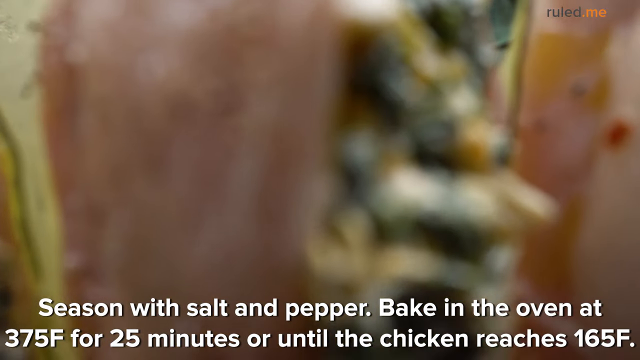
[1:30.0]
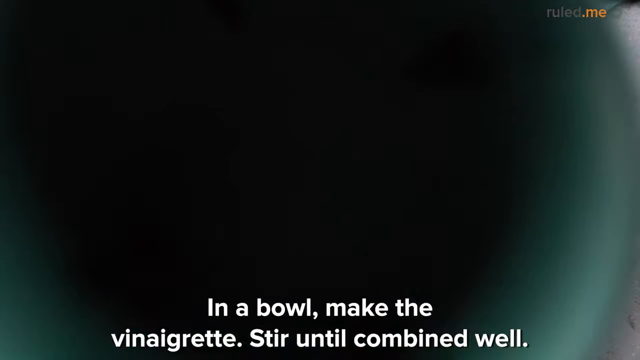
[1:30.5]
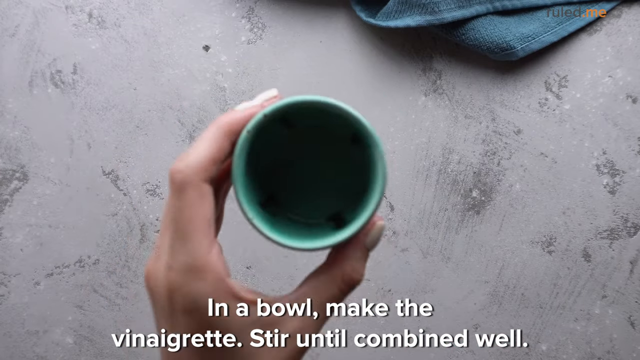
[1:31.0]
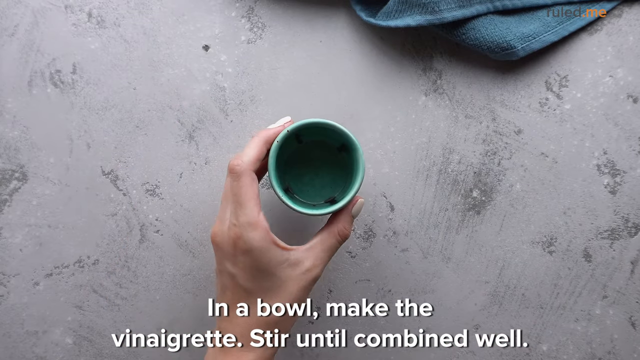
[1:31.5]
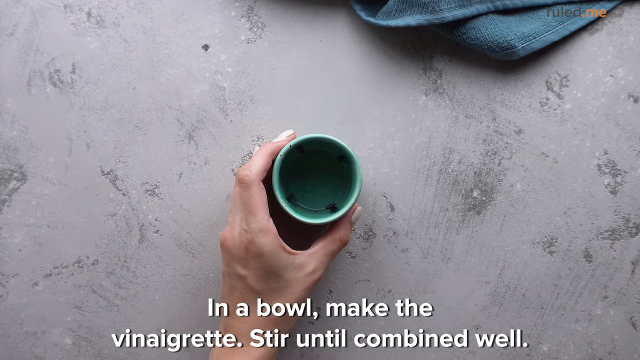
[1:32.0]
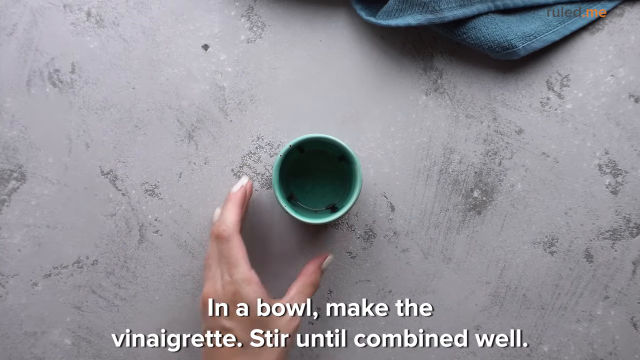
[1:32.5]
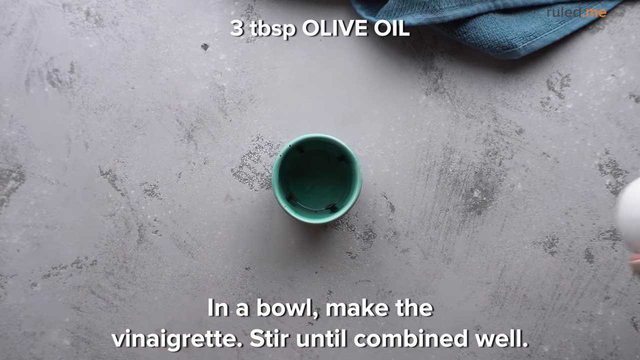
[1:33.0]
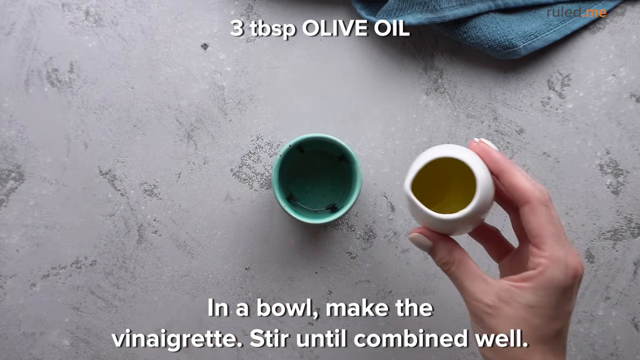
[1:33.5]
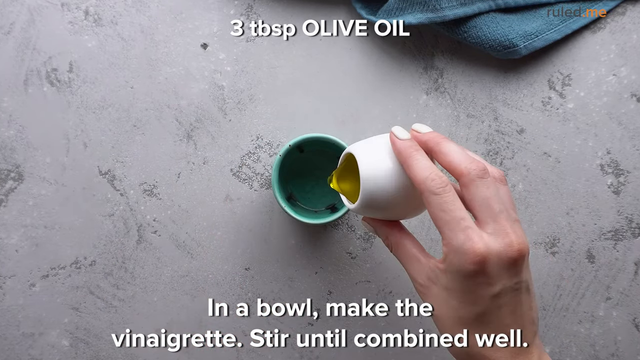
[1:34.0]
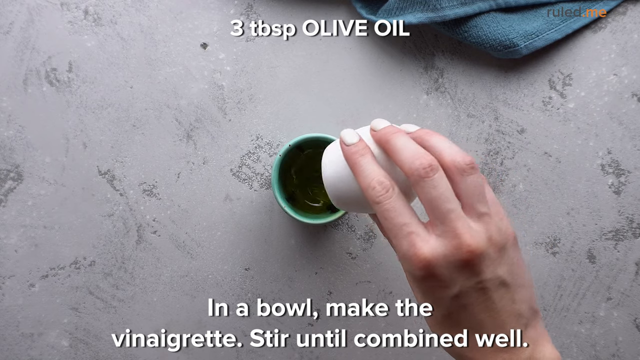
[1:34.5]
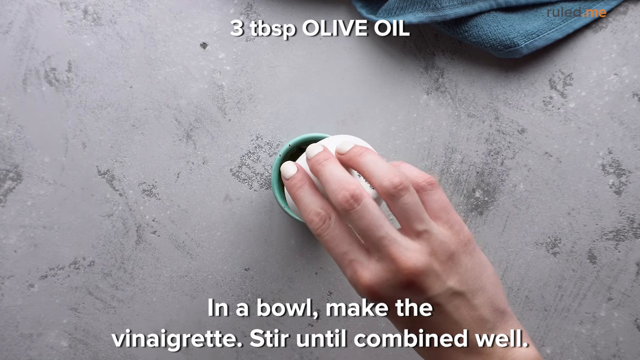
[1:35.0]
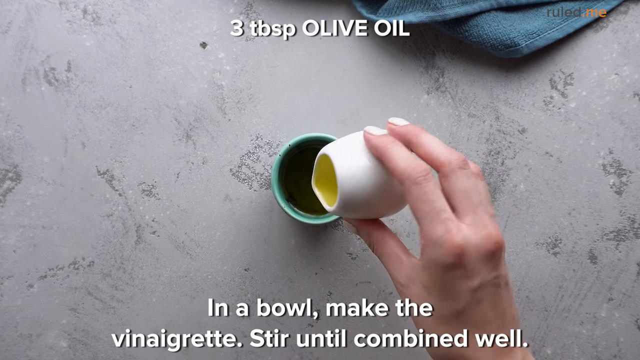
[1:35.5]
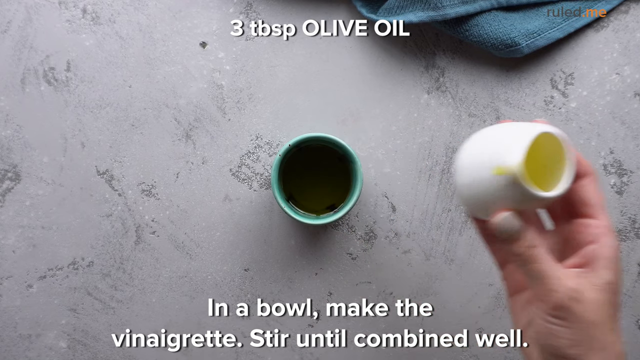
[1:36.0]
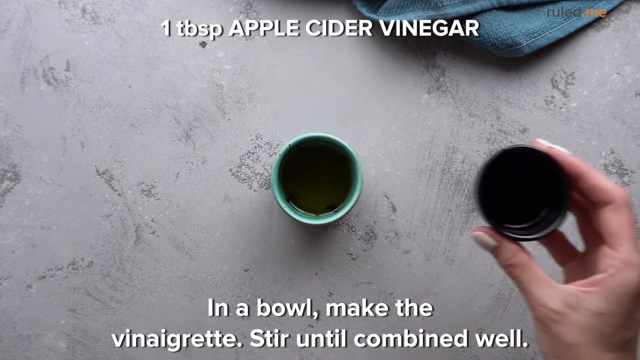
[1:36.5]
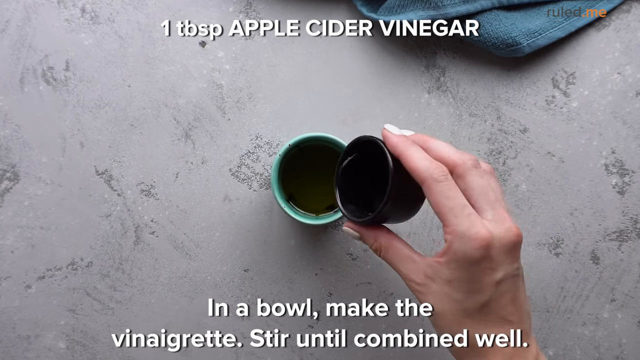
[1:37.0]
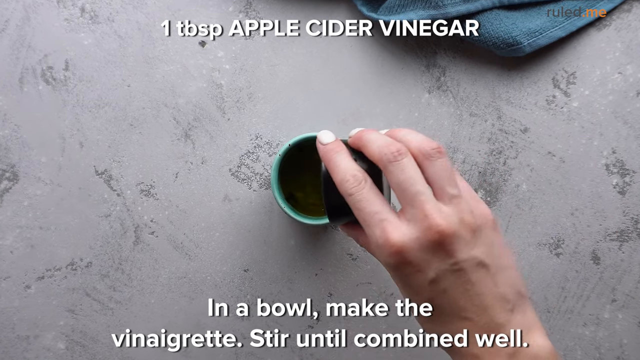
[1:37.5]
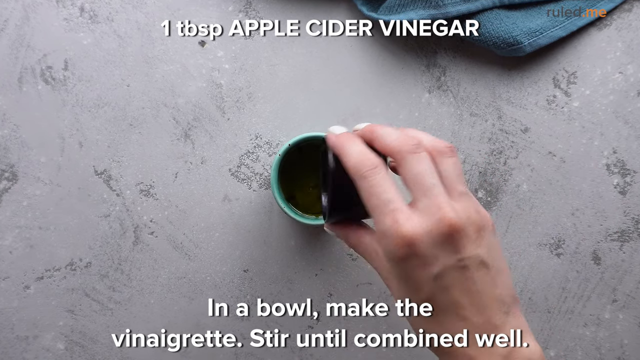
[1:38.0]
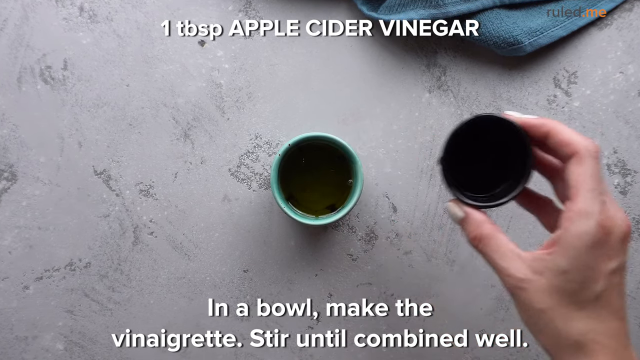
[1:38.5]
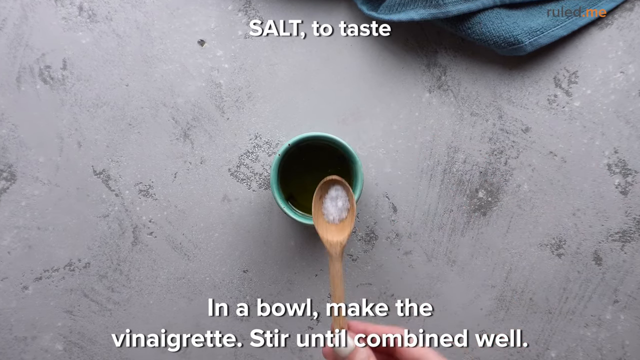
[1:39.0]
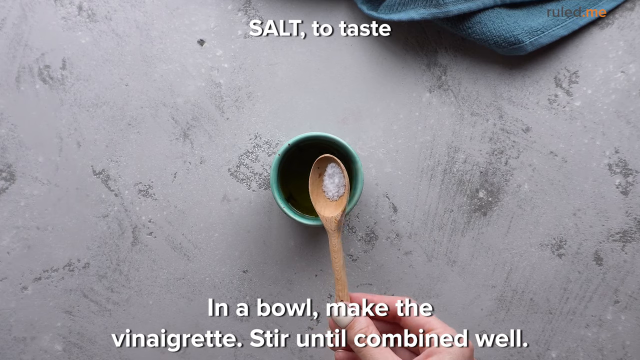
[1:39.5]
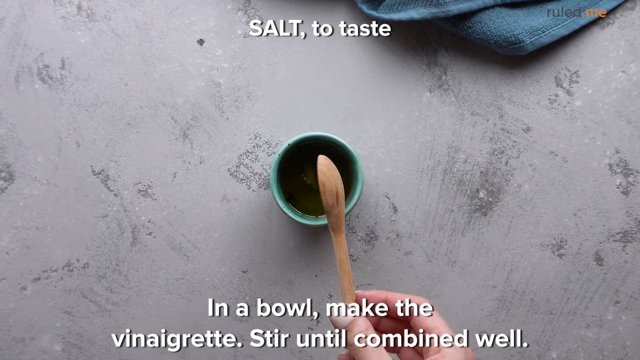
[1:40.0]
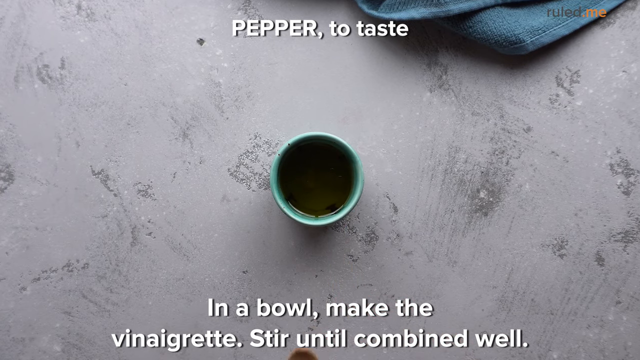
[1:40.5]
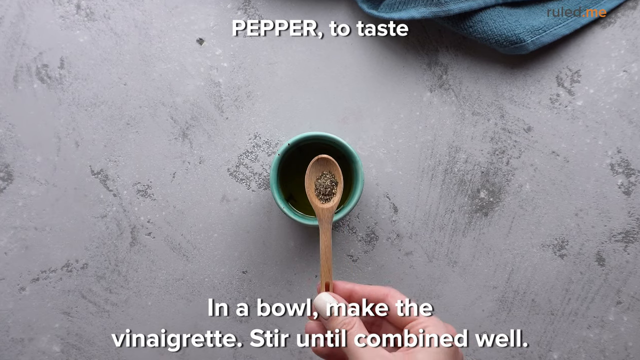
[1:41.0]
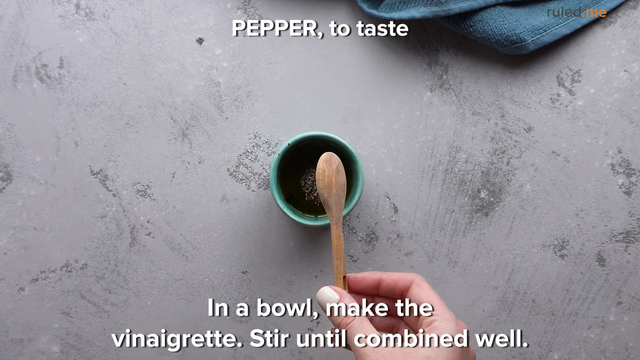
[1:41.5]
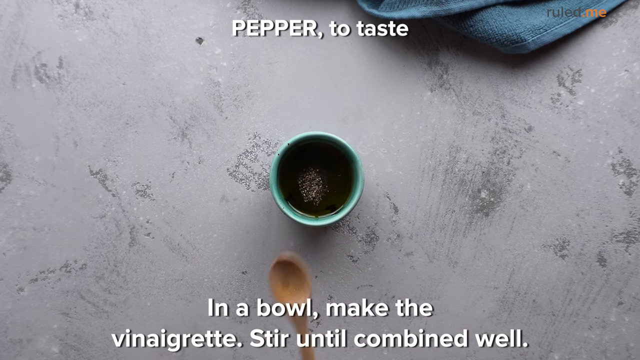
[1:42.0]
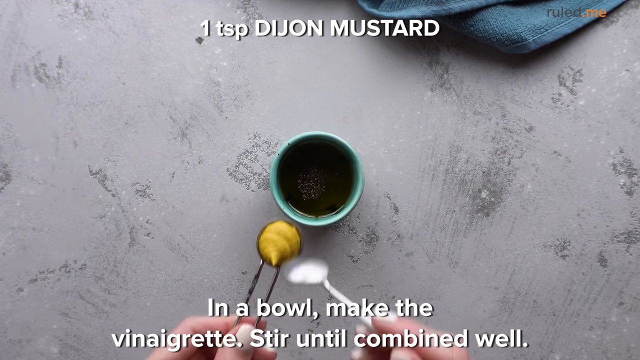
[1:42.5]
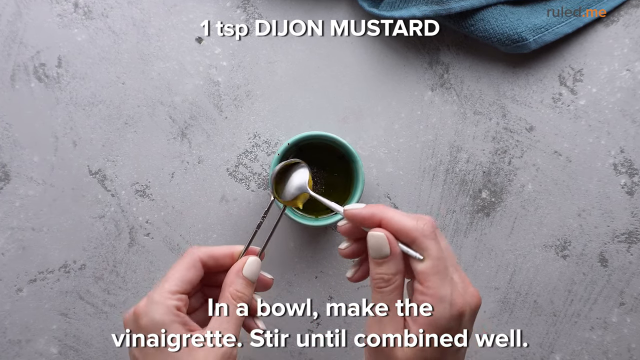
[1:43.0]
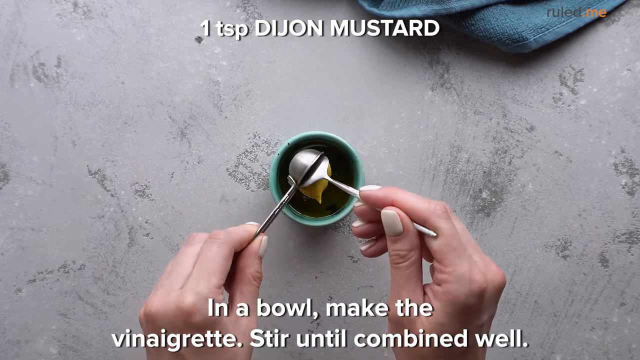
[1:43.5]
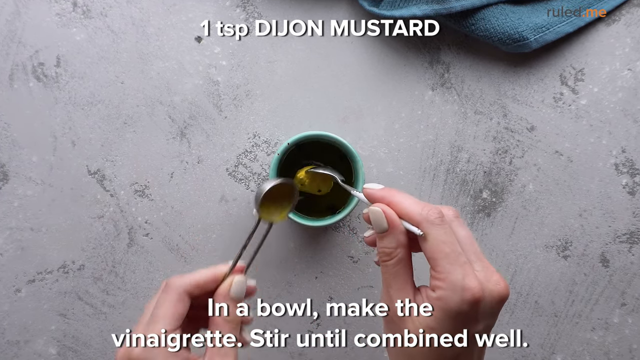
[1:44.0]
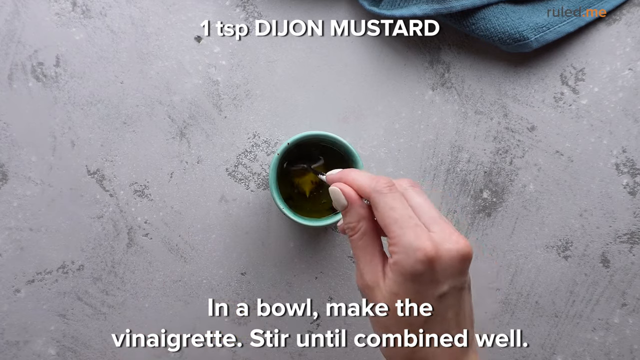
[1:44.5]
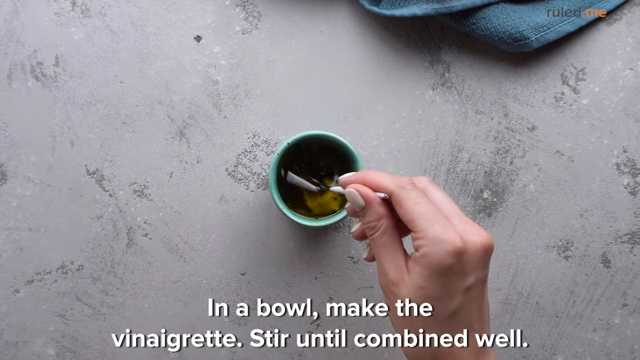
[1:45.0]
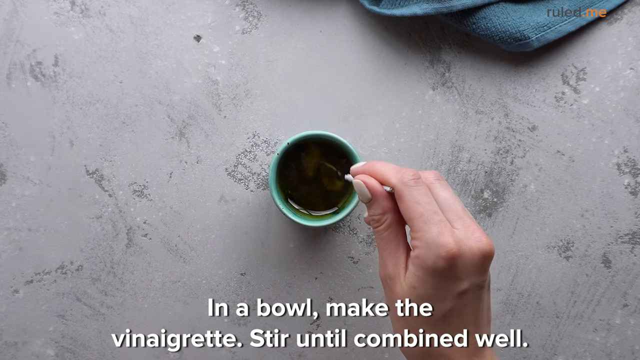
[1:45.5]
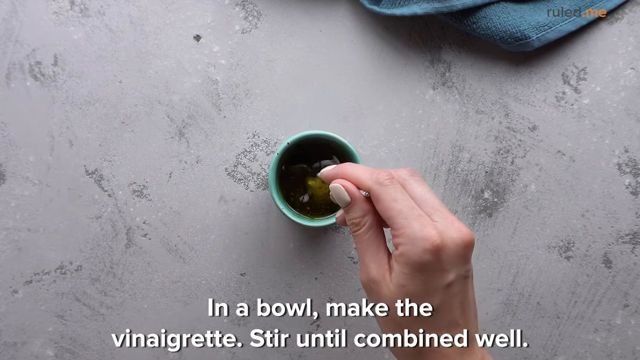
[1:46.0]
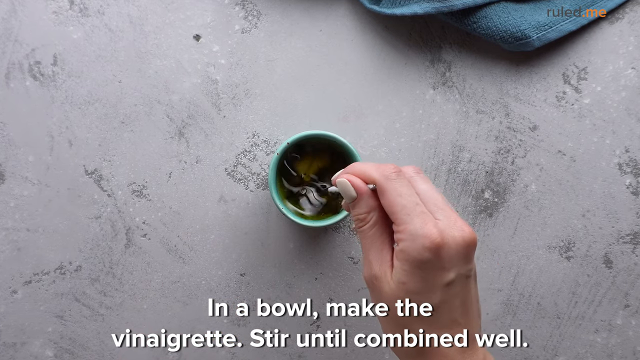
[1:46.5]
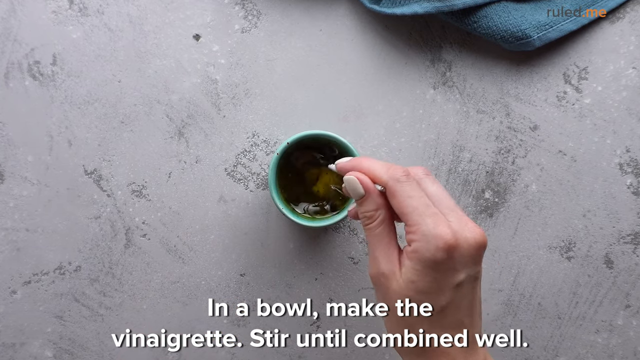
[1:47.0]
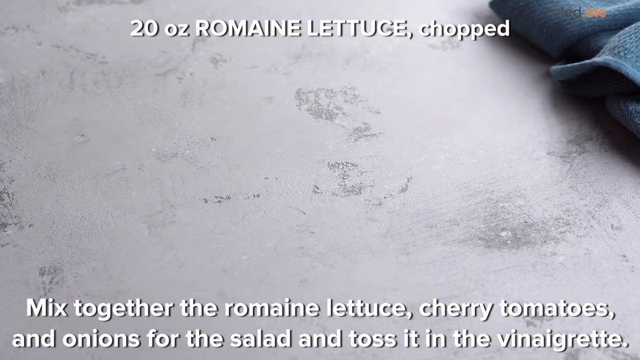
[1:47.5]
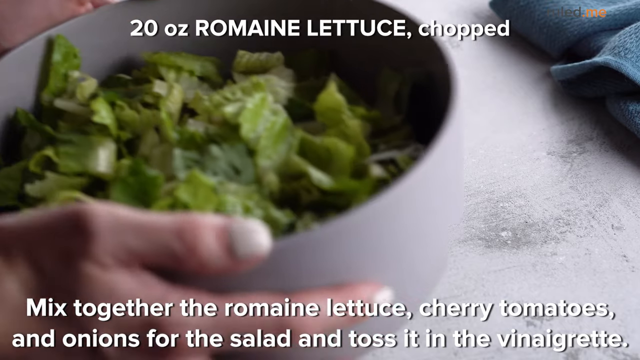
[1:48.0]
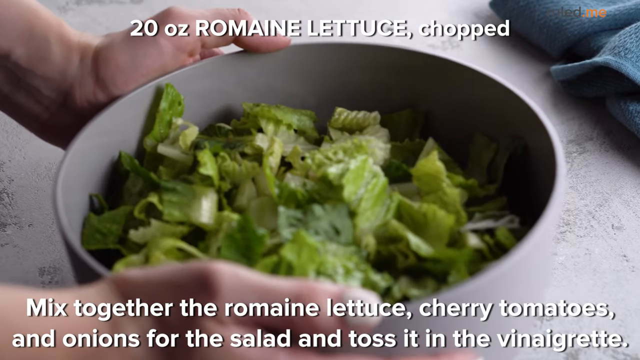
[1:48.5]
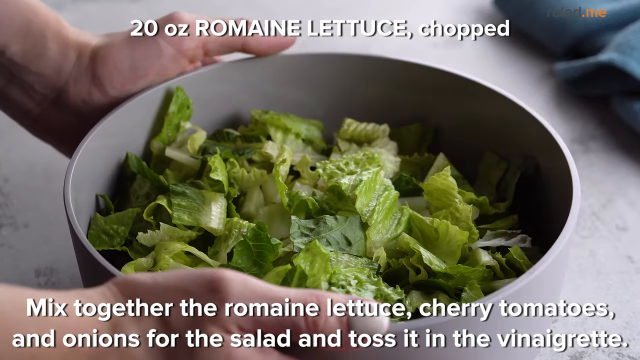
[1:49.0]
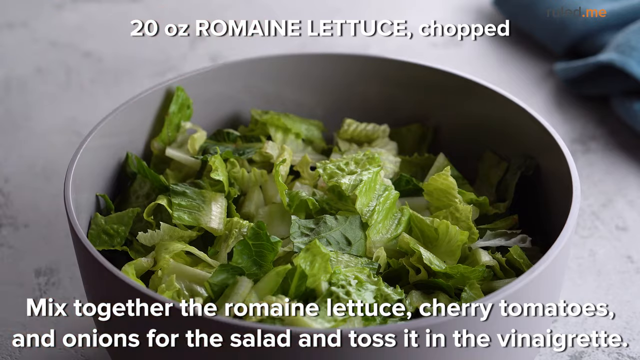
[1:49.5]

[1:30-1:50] Text at the top begins "in a bowl make the" and lists ingredients as they are added to a very tiny bowl, including salt, pepper and Dijon mustard. The person stirs the mixture completely in the tiny bowl, which appears to be a dressing for the salad, though this is not stated. A big bowl of lettuce greens is shown; the same person sets down the bowl of lettuce, and tomatoes are poured in from a larger bowl on the left by hands that are not seen.